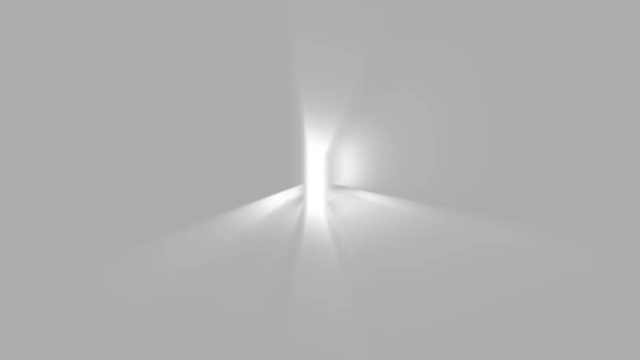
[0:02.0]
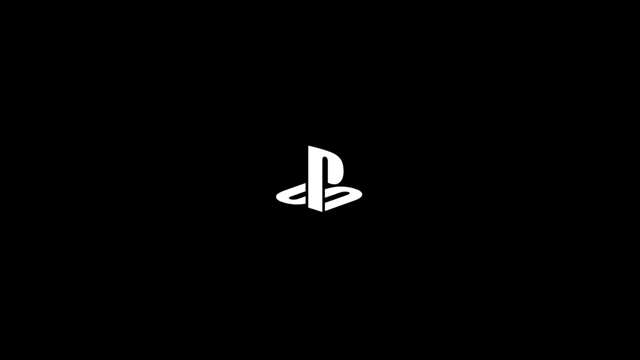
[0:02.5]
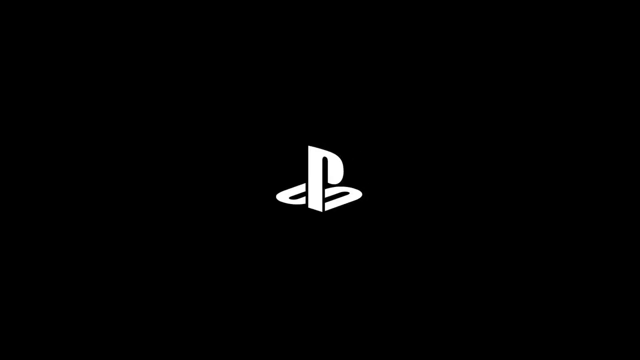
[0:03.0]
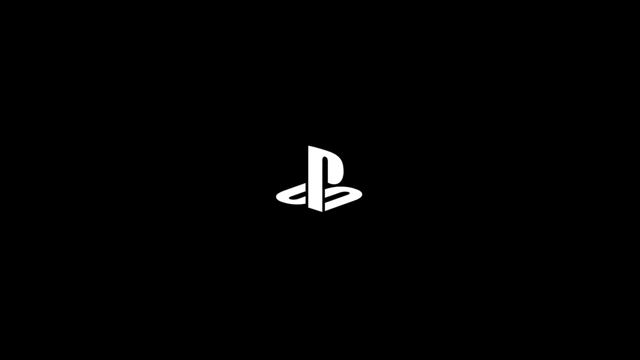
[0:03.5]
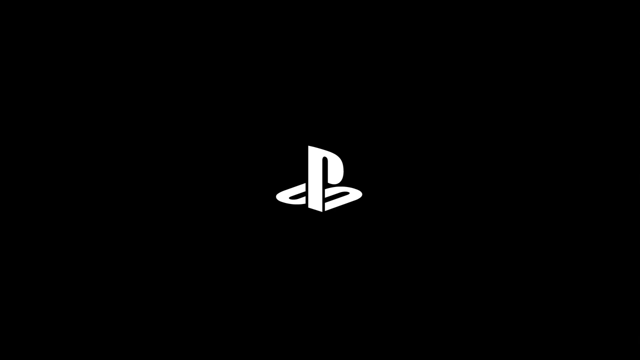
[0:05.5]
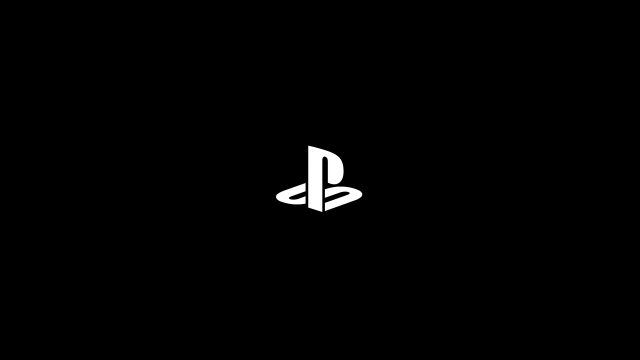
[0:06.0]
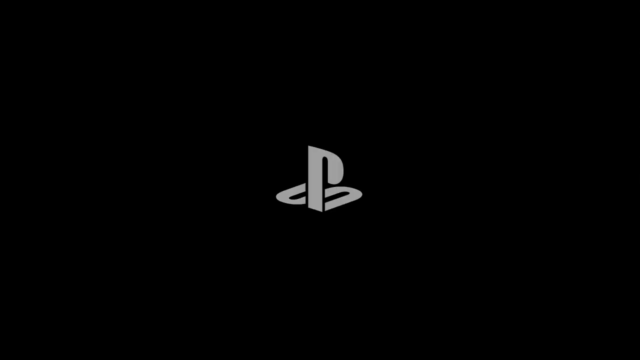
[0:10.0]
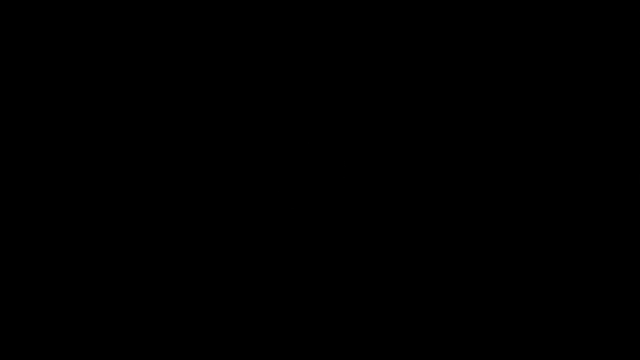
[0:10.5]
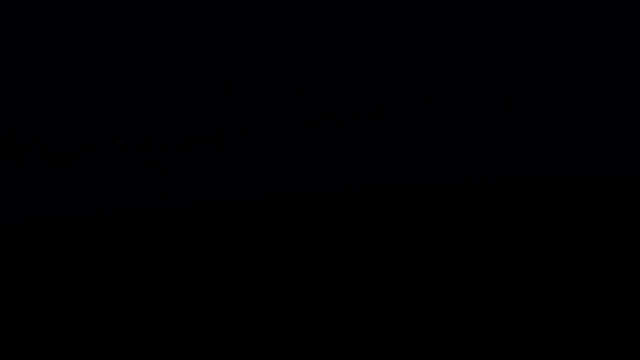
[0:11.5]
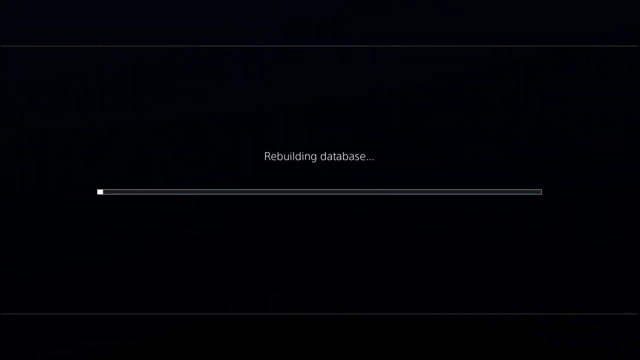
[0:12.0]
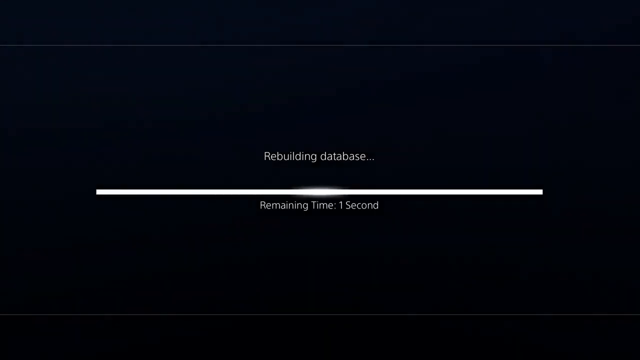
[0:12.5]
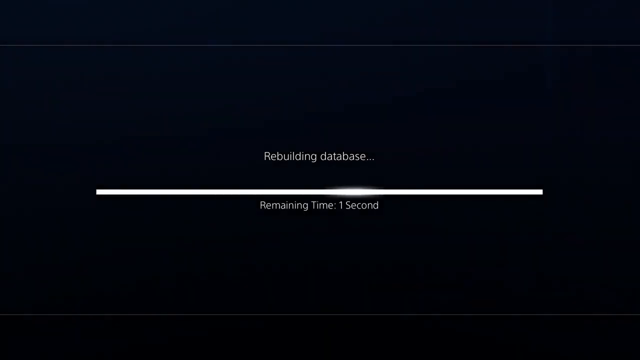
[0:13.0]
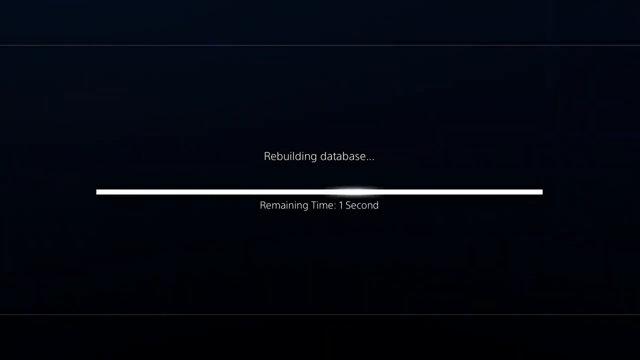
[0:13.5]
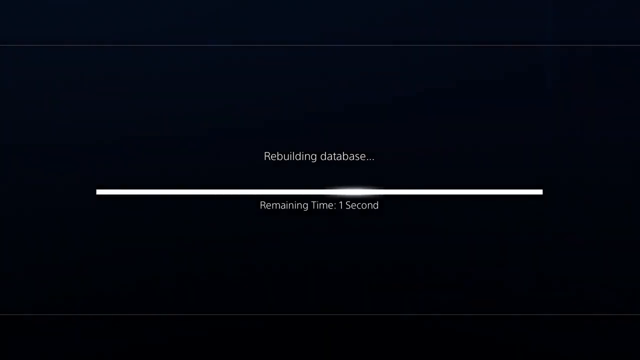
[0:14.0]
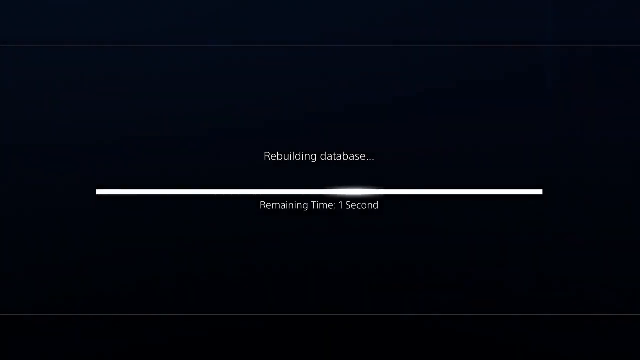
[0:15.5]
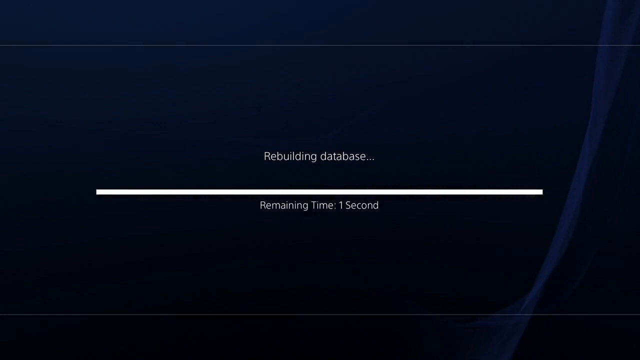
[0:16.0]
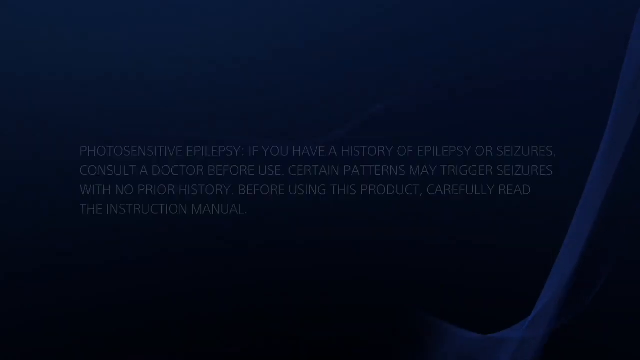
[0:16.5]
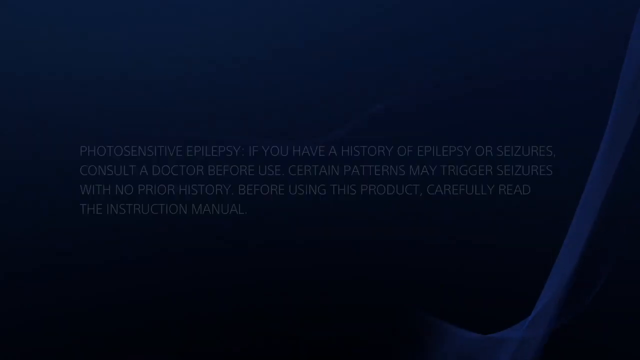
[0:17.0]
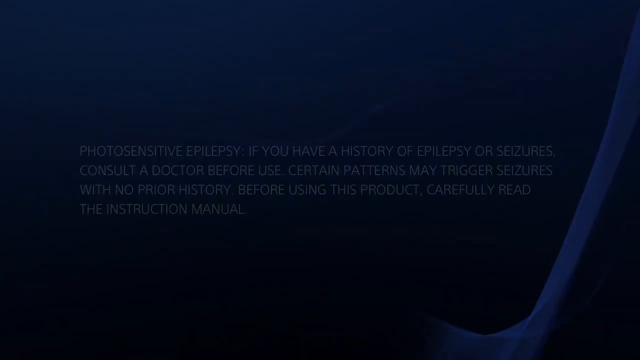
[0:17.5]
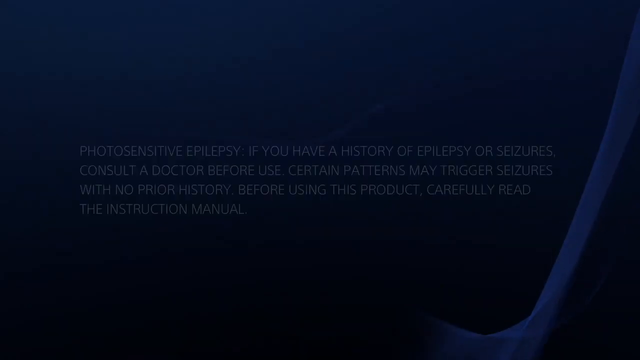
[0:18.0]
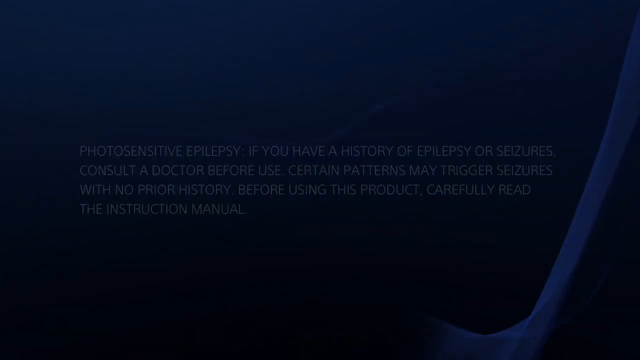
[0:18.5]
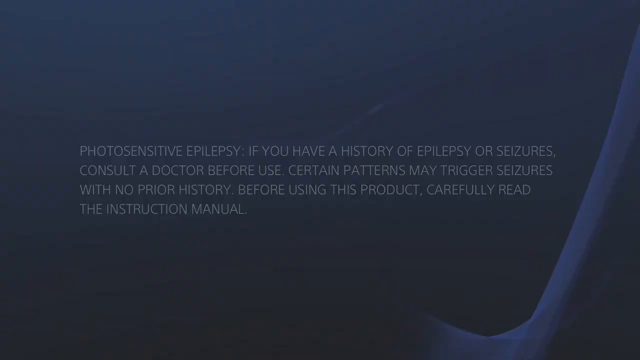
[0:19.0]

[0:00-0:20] The video opens with what appears to be an introduction to a video about the PlayStation system. A black screen shows the Sony PlayStation logo in white against the black background. Next comes what appears to be a wooden backdrop, on which there is a PlayStation controller. The controller is all white and its buttons are black. On the right are four buttons with triangle, circle, x and square shapes. On the far left are what appear to be buttons with a cross symbol. There are two numpads, a sensor, a speaker and a Sony logo. There appear to be bumpers on the far left and far right, along with two white handles, one on the left and one on the right, showing the shape of the controller.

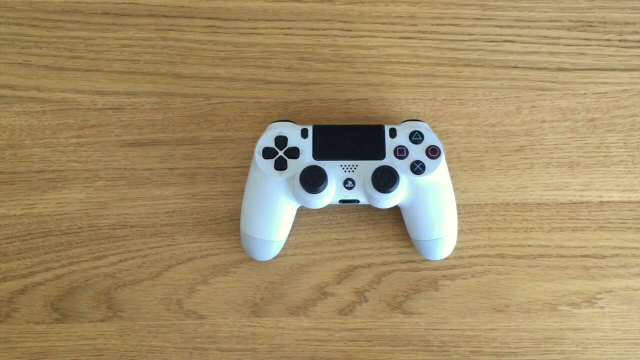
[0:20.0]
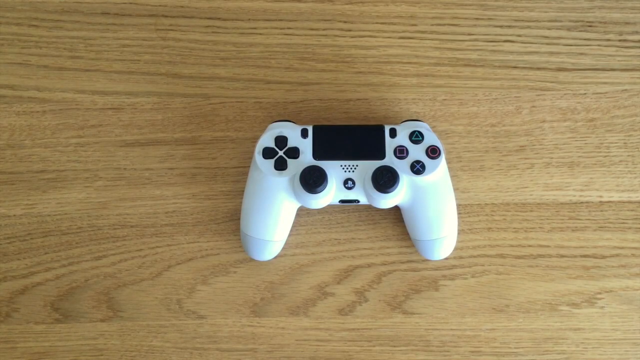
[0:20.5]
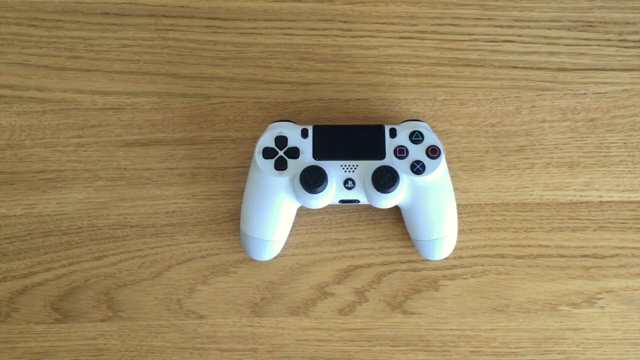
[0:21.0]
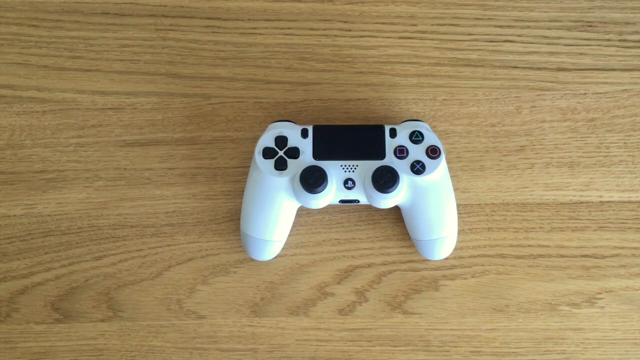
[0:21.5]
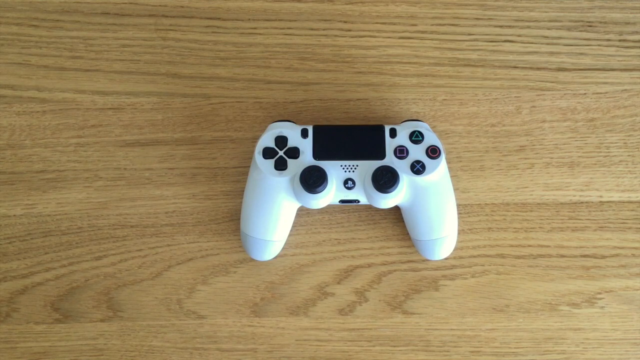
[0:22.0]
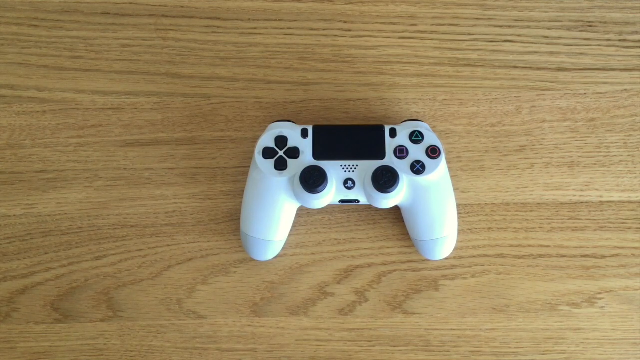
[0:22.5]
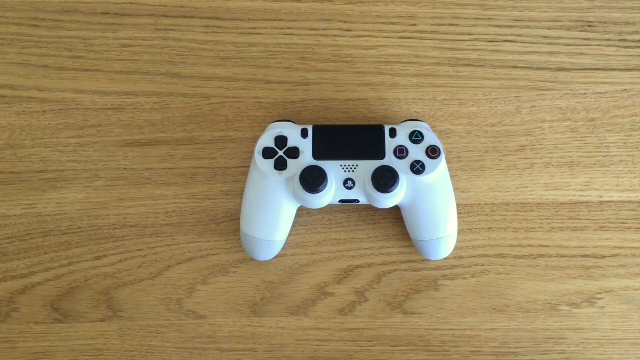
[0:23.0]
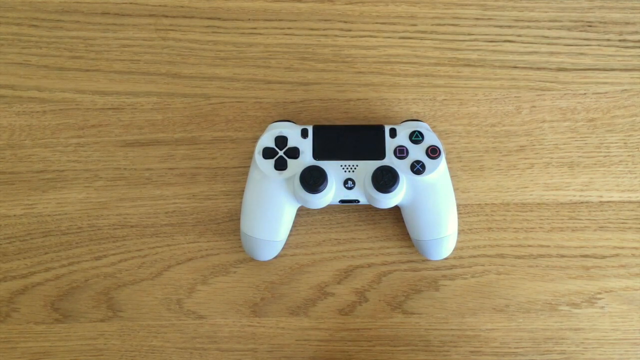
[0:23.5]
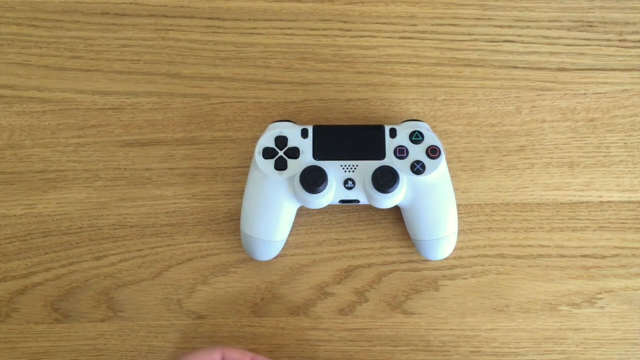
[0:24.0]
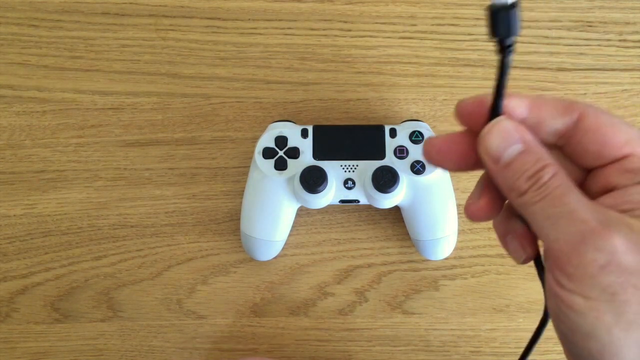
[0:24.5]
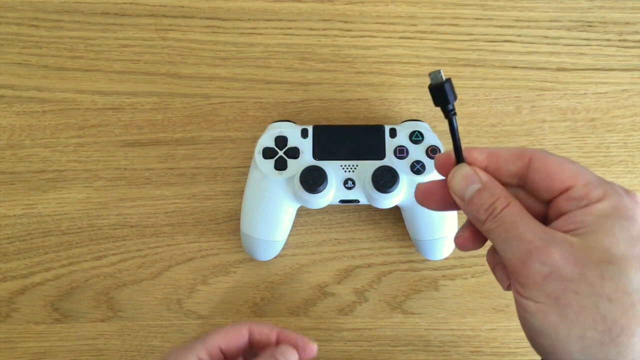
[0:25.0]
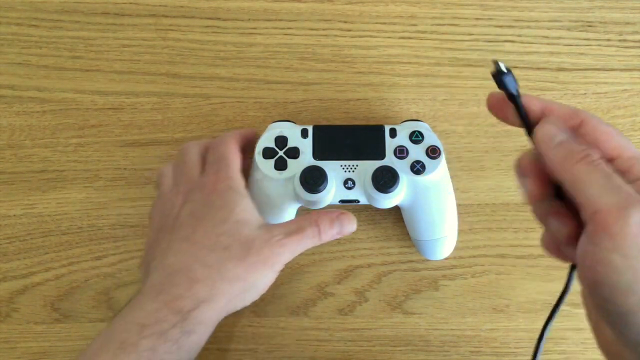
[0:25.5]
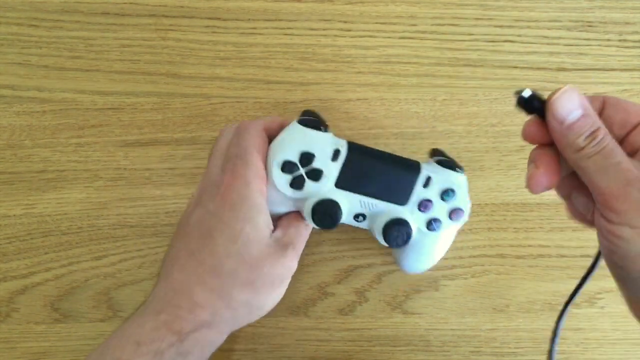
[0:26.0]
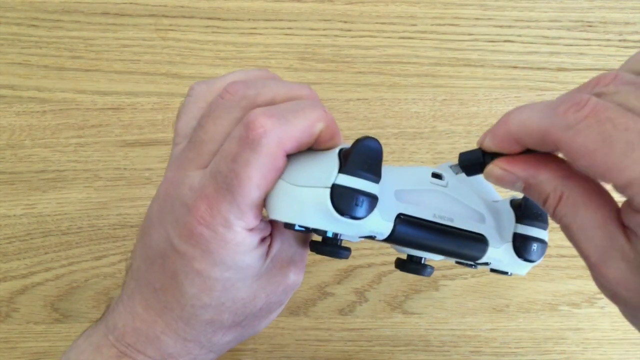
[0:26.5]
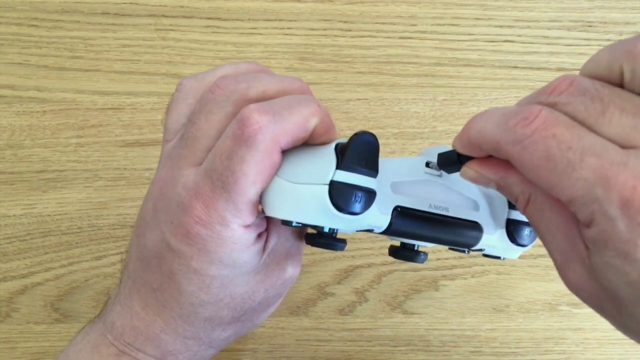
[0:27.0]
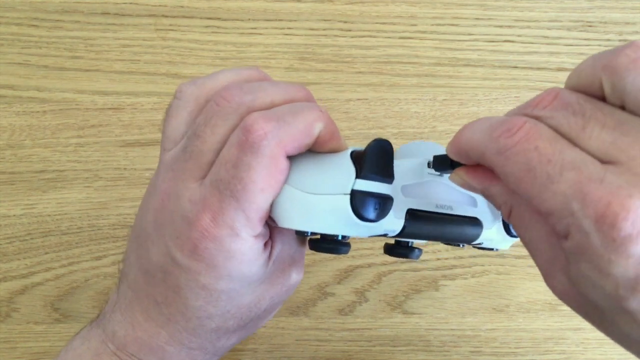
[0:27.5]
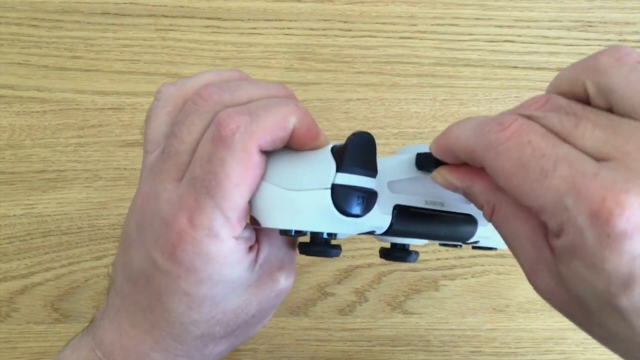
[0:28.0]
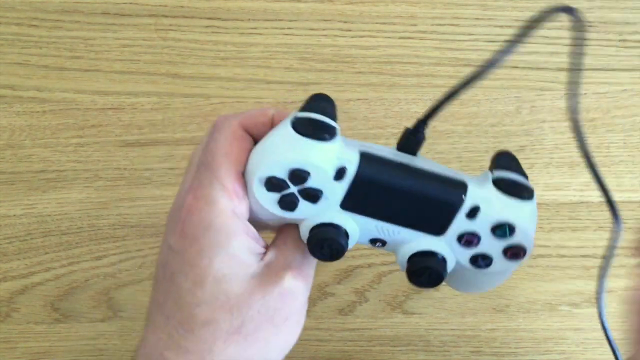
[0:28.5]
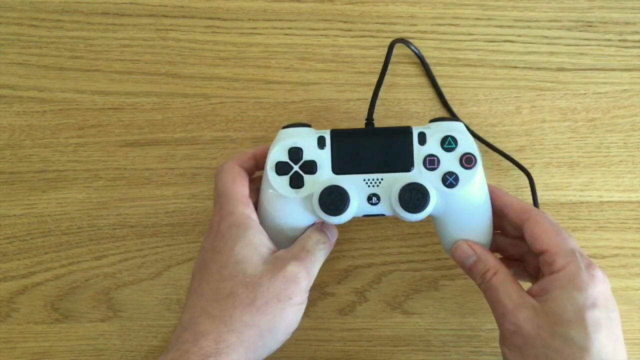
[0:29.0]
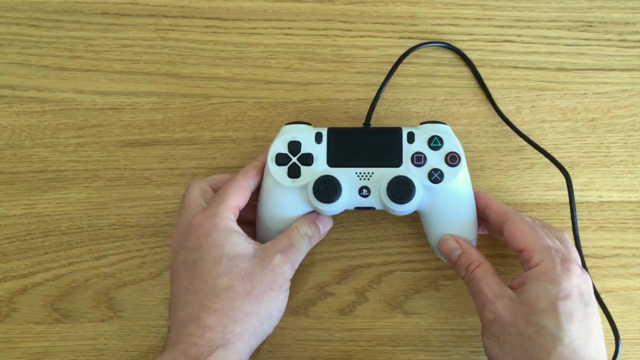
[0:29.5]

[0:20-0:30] The controller lies on the wooden surface, which appears to be a light brown, giving a contrast. It is idle and not connected to anything. A shadow moves in from the bottom, and then a hand appears holding a black wire with a metal tip to plug into the controller. The controller is lifted upwards toward the camera, with the hand grasping the left side of its handle. This reveals the four bumpers on top: L1 and L2 on the left side and R1 and R2 on the right side. At the very bottom of the controller is a port, and the individual physically sticks the wire into it. He then places the controller back down, now with the long black wire attached.